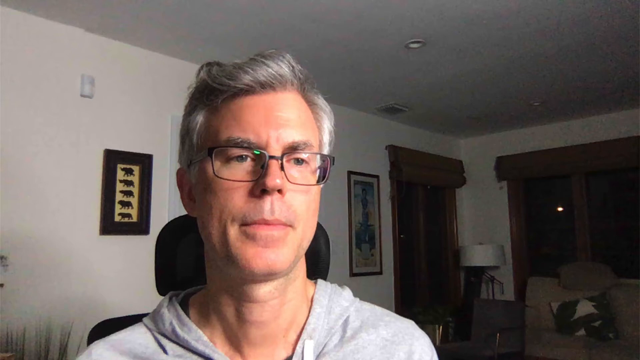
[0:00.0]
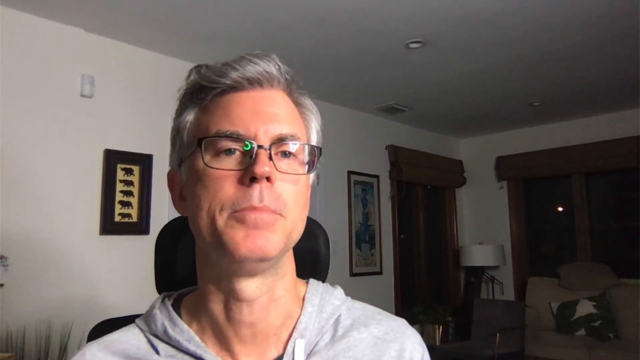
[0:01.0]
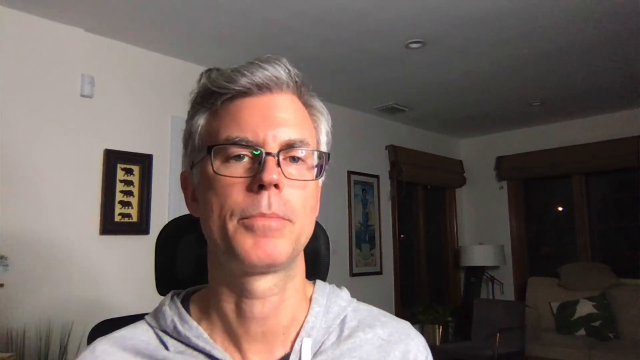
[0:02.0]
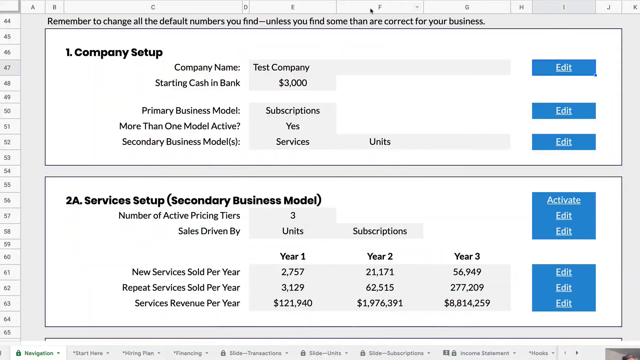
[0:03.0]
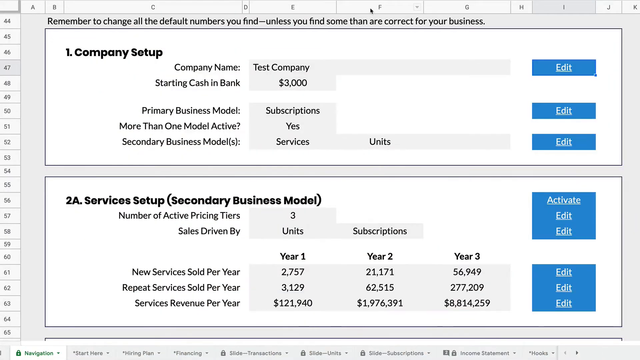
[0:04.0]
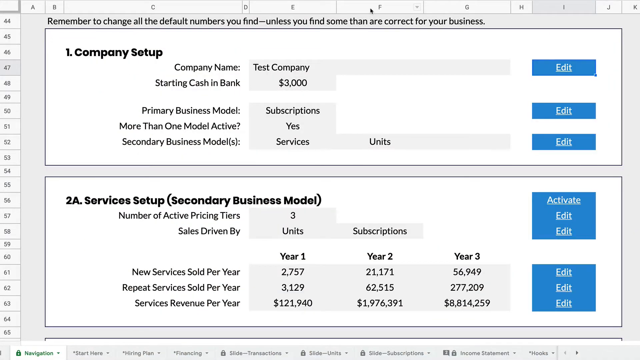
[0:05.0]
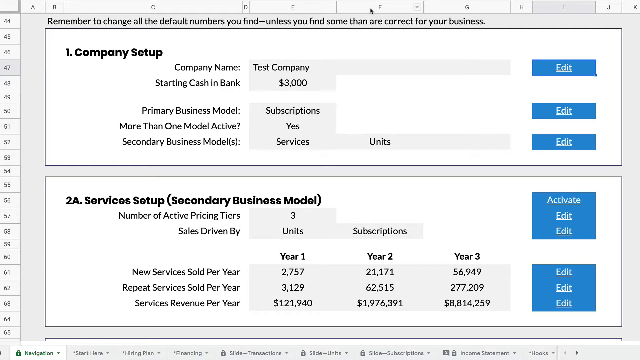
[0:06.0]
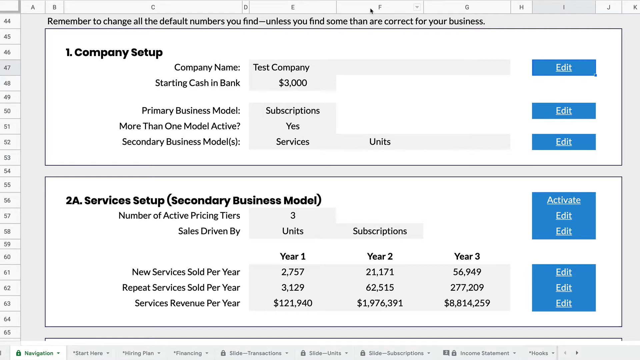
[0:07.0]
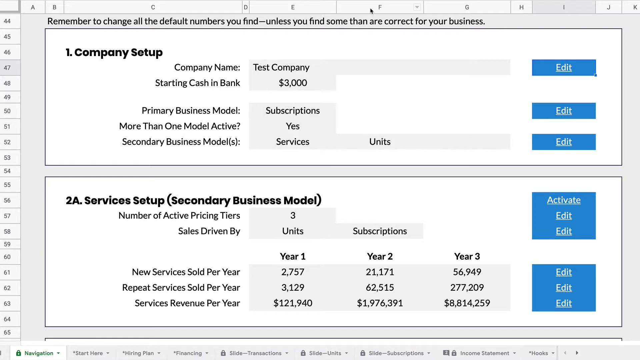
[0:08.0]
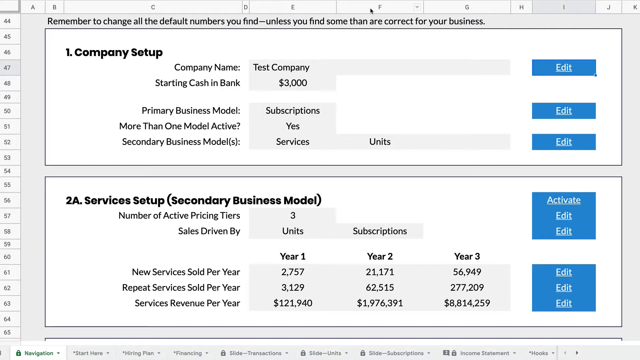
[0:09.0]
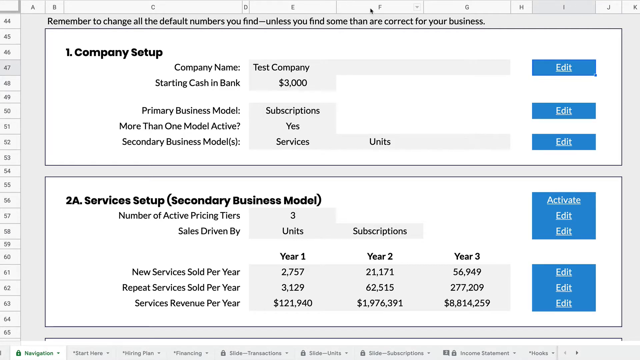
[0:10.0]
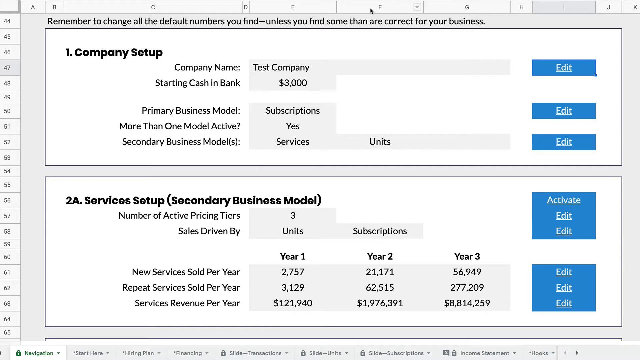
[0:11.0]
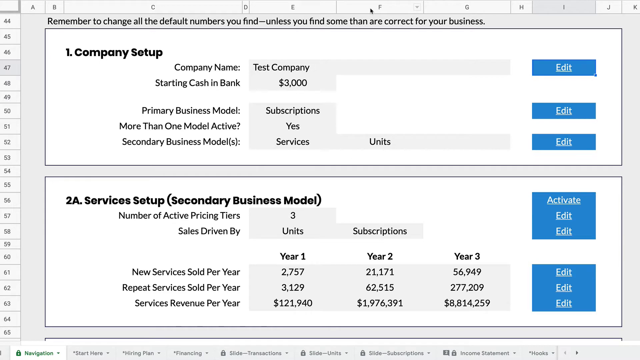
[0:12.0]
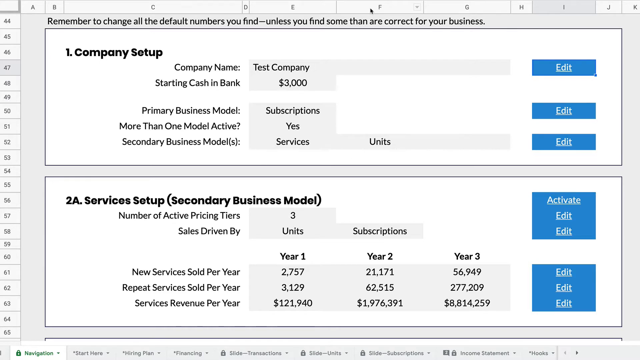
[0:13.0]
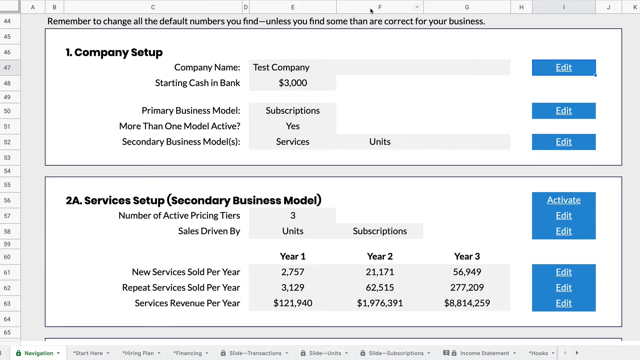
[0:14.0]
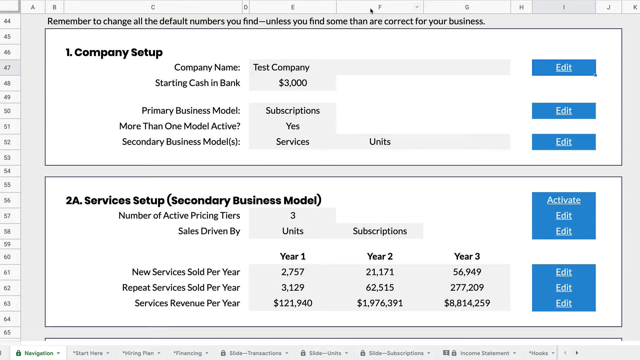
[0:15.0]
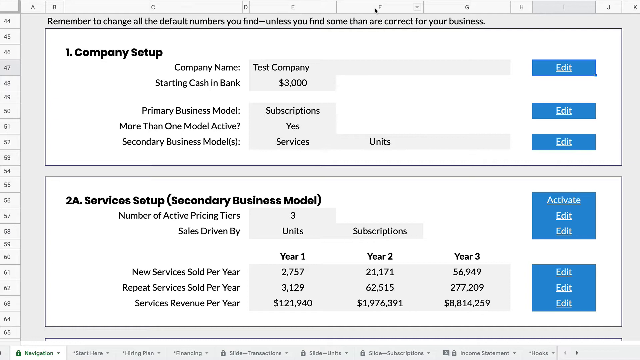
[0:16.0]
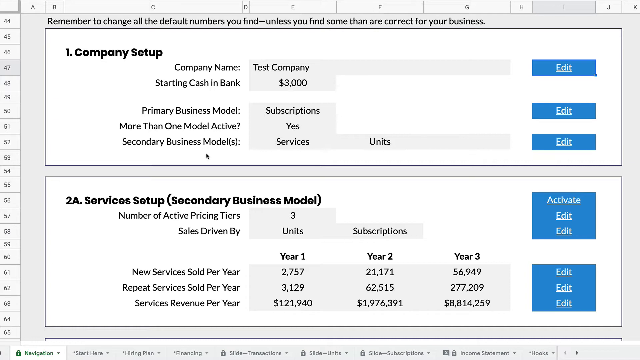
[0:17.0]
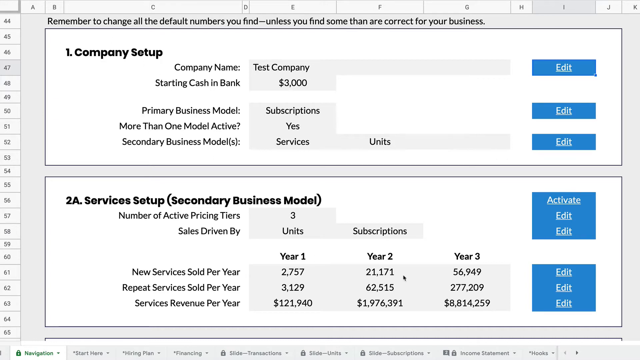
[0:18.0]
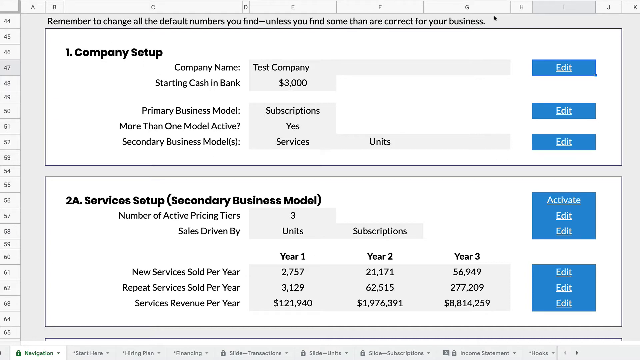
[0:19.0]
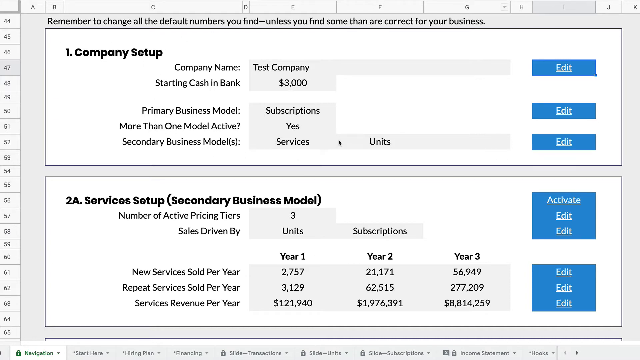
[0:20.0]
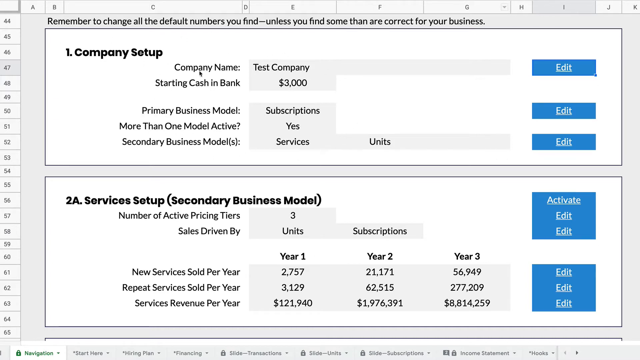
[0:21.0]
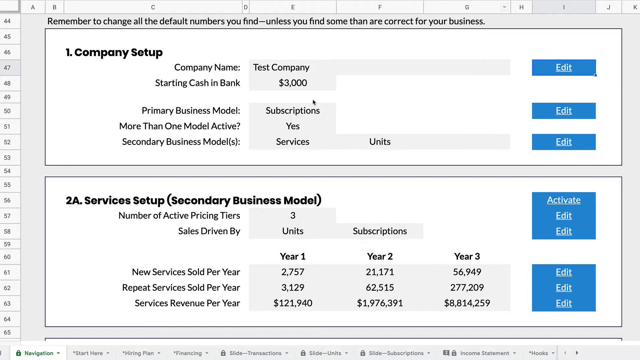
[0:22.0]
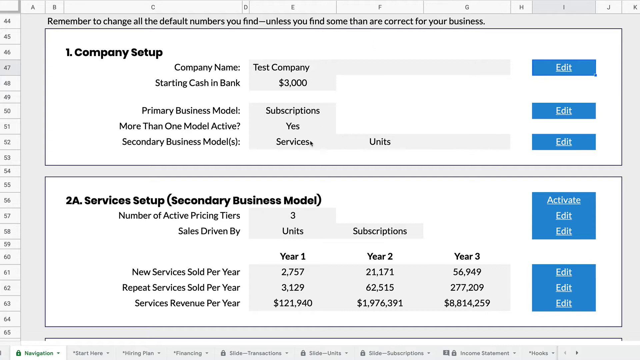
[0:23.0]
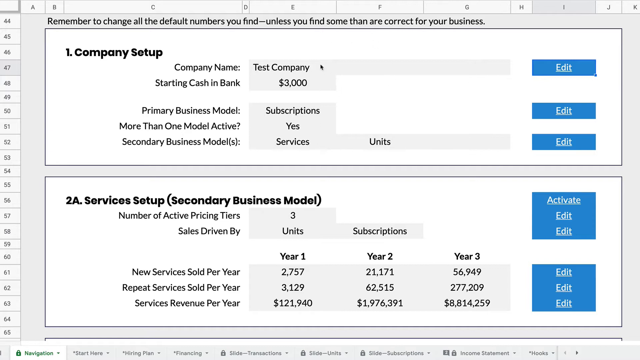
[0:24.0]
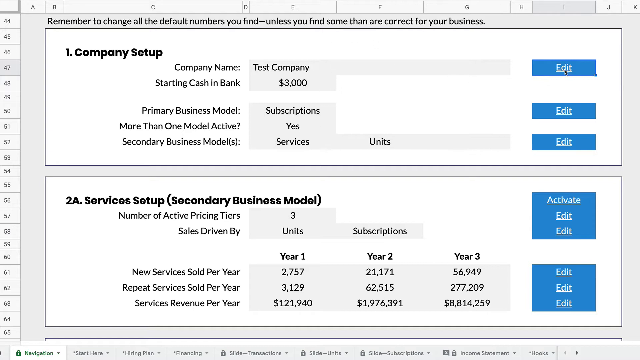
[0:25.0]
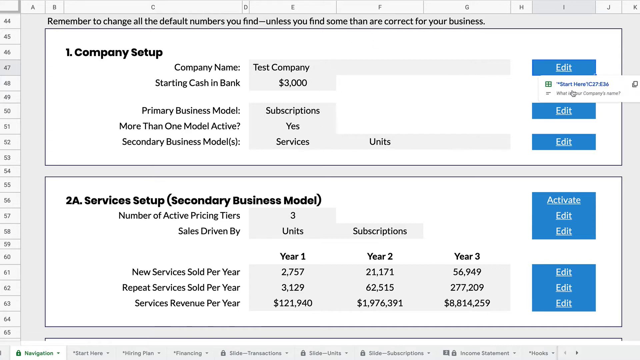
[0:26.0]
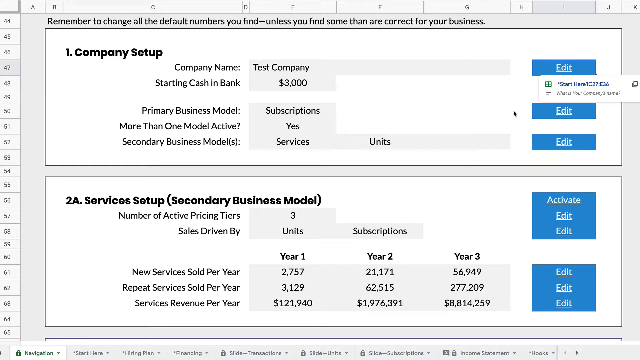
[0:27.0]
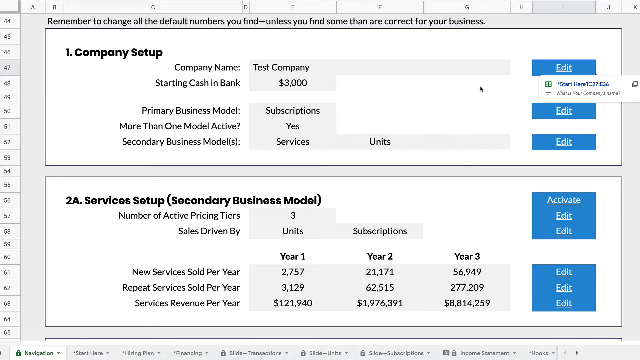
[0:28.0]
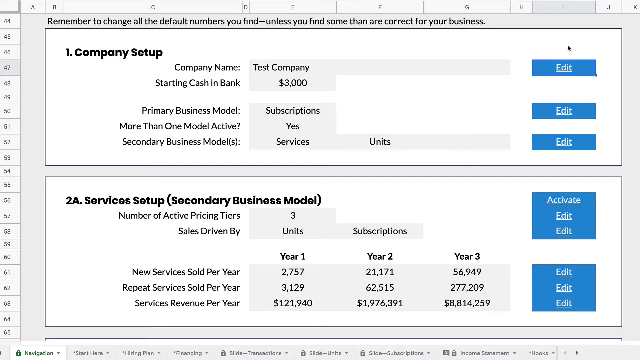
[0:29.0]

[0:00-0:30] A man talks in his office, and then the video cuts to a spreadsheet, possibly an Excel spreadsheet, with text at the top reading "remember to change all default numbers you find unless you find some that are correct for your business." Letters A, B, C, D, E, F, G run along one side, with rows 44 to 65. The sheet lists "company setup," "test company," "starting cash and bank 3000," "primary business model subscriptions," "more than one model active, yes," and "secondary business model services units," with blue edit buttons on the side. Another block reads "2A services setup," "secondary business model," "number of active pricing tiers three," and "sales driven by unit subscriptions," with "activate" and two edits on the side. Below that are columns for year one, year two, and year three, with rows for new services sold per year, repeat services, and revenue per year, each showing monetary amounts for each year. The mouse moves around the screen, highlighting "services" and "test company," and goes to edit. Some dropdowns start in a couple of cells.